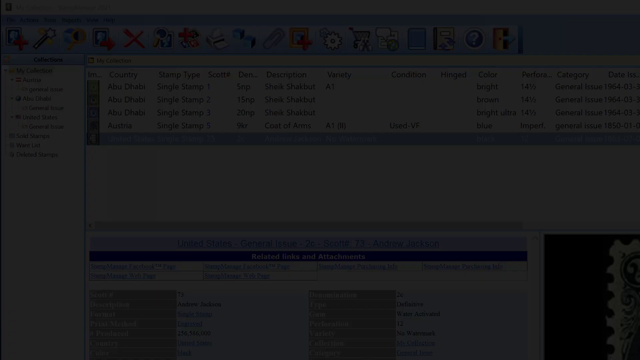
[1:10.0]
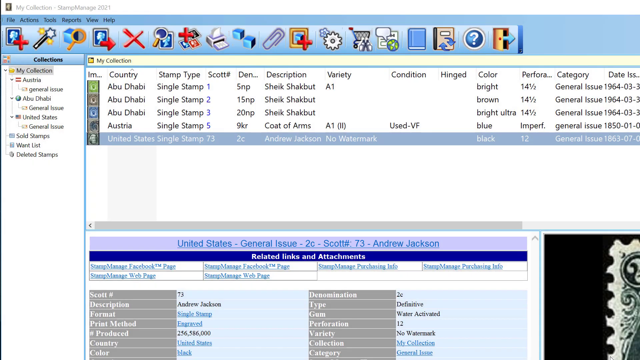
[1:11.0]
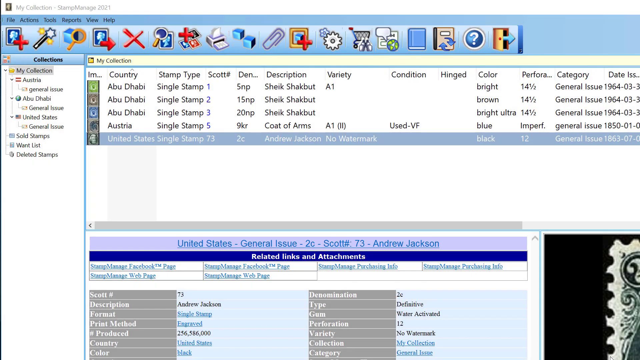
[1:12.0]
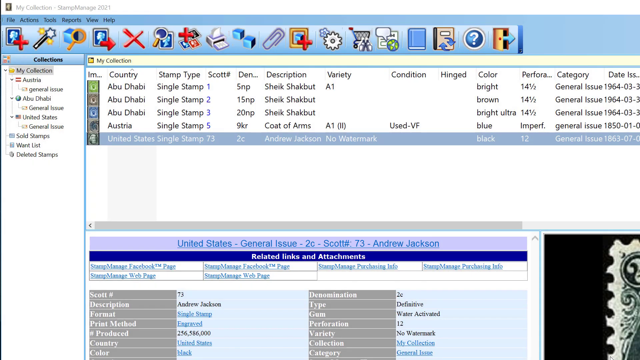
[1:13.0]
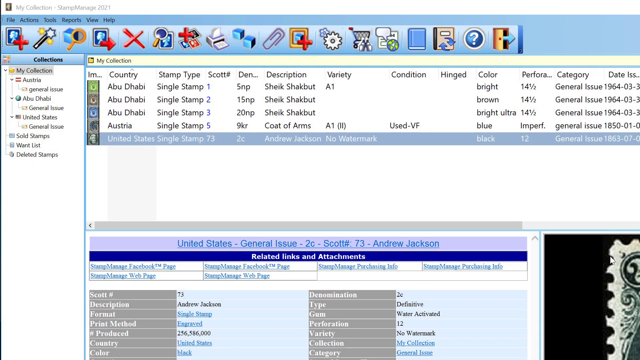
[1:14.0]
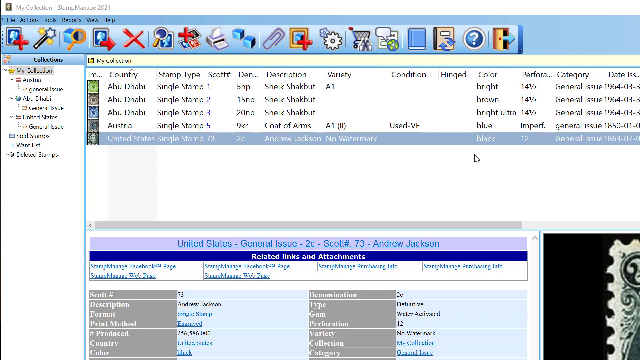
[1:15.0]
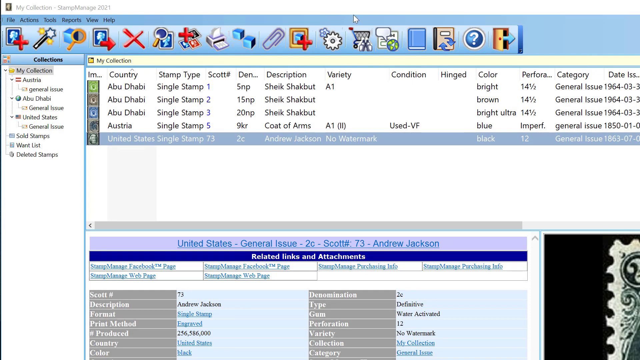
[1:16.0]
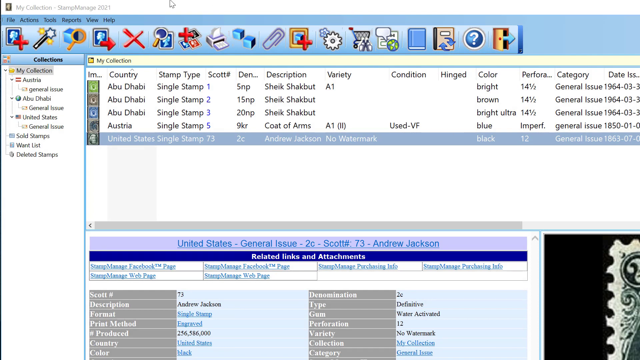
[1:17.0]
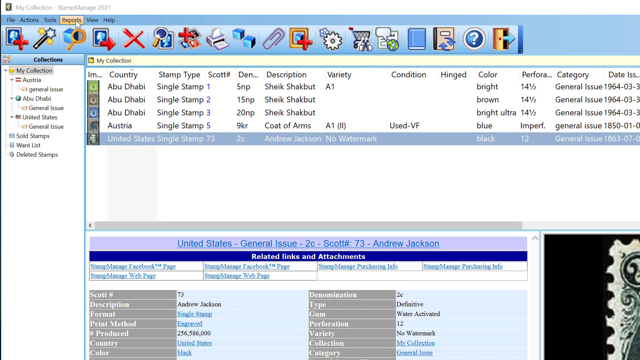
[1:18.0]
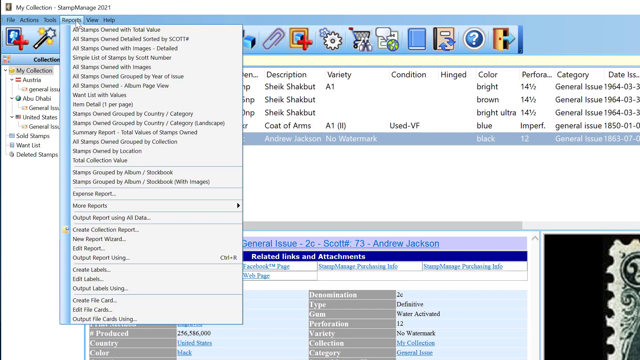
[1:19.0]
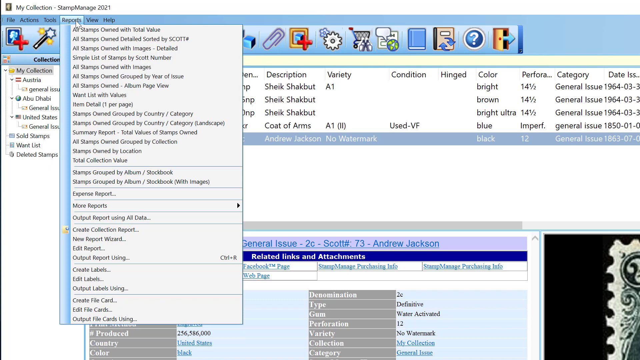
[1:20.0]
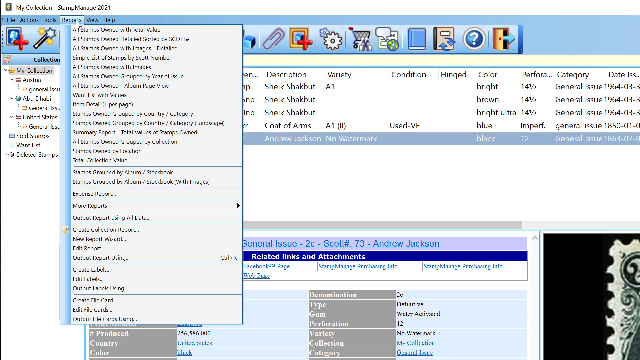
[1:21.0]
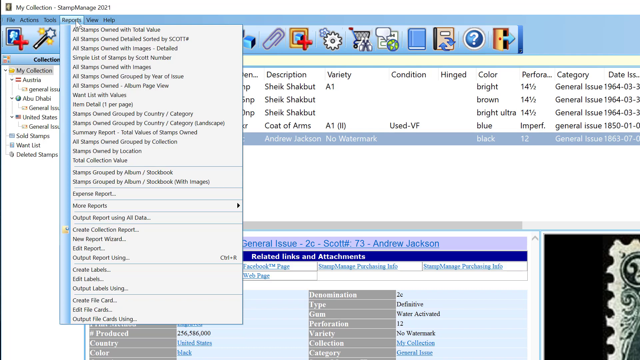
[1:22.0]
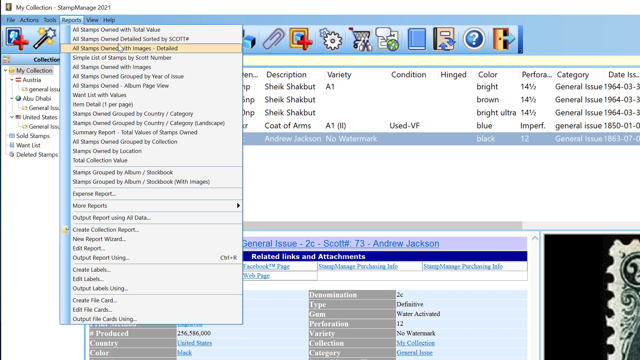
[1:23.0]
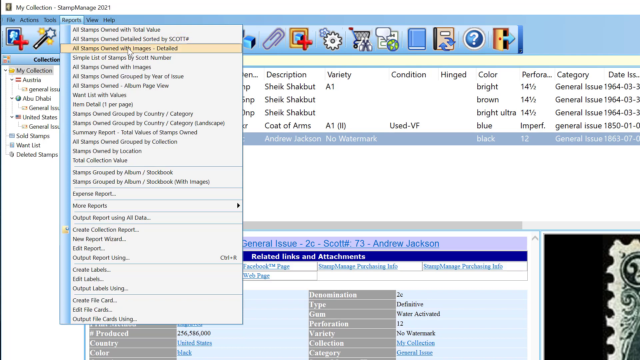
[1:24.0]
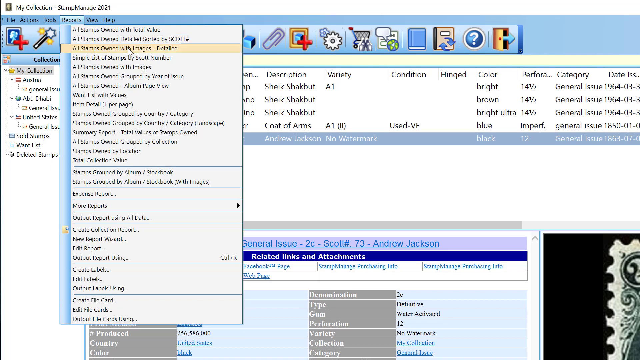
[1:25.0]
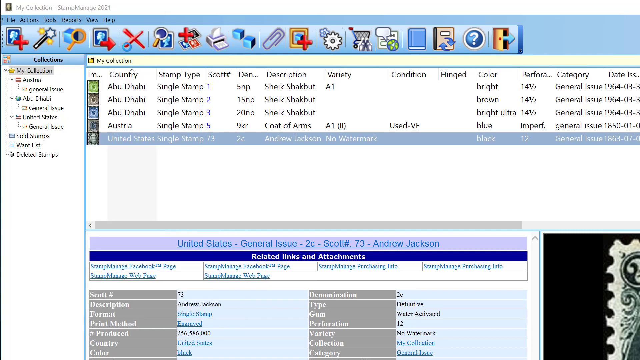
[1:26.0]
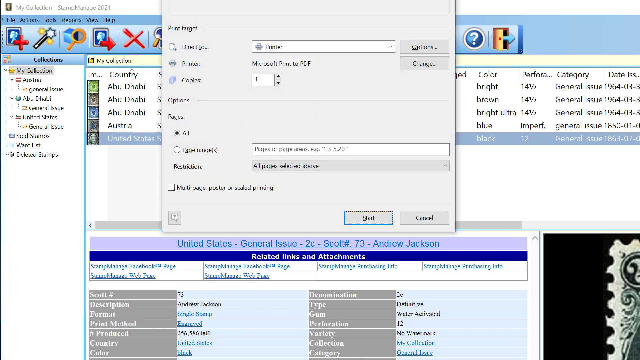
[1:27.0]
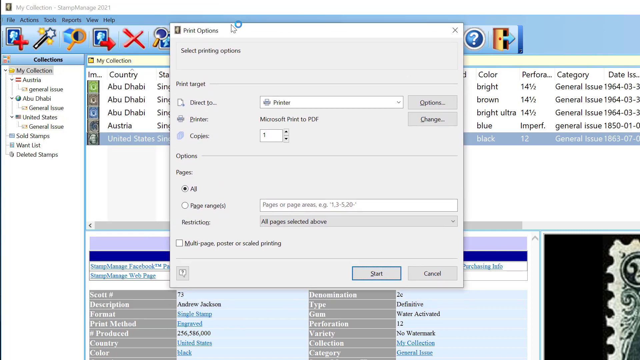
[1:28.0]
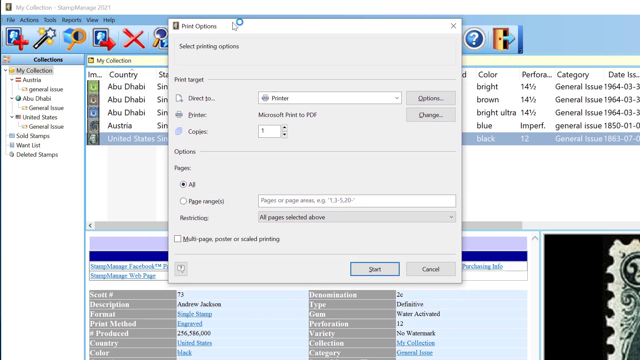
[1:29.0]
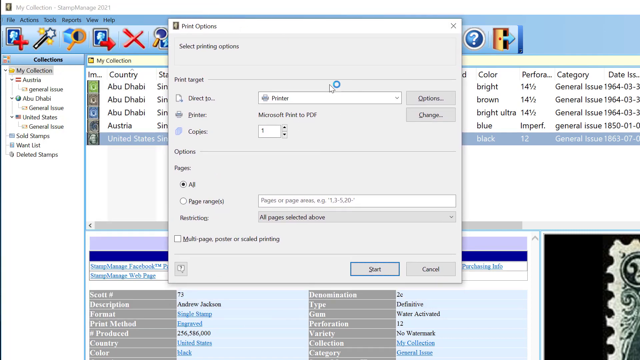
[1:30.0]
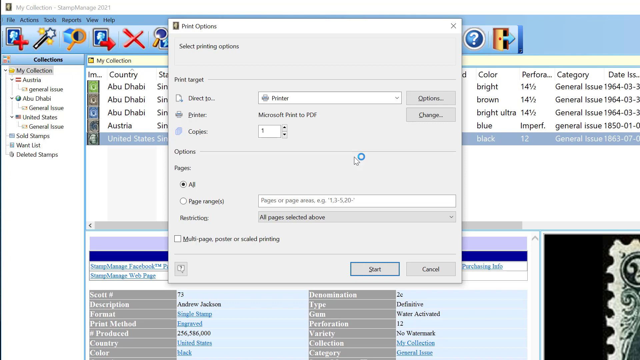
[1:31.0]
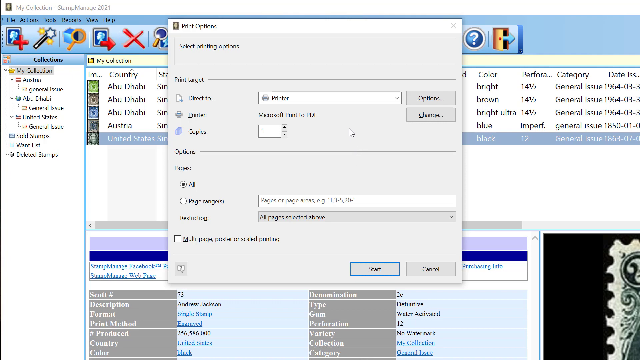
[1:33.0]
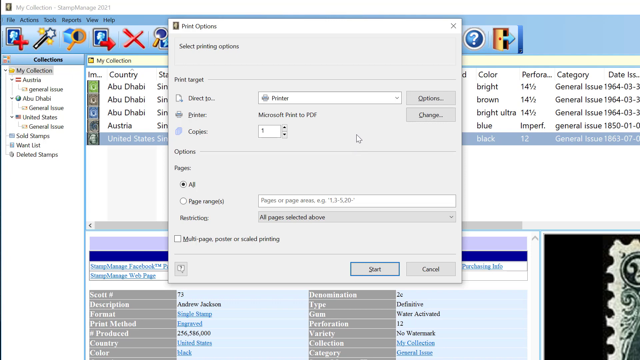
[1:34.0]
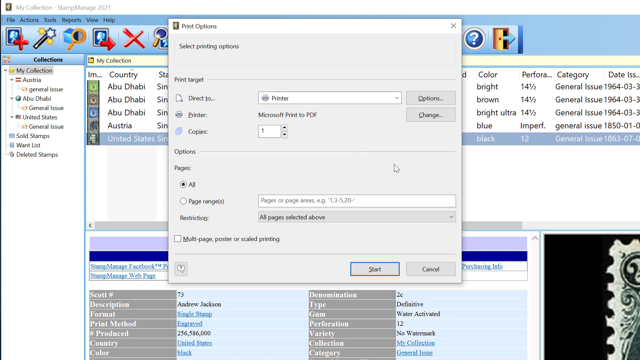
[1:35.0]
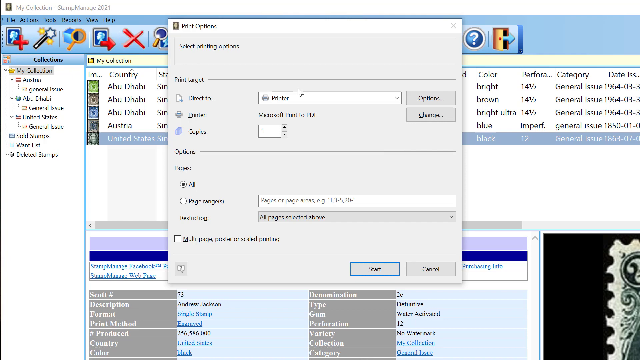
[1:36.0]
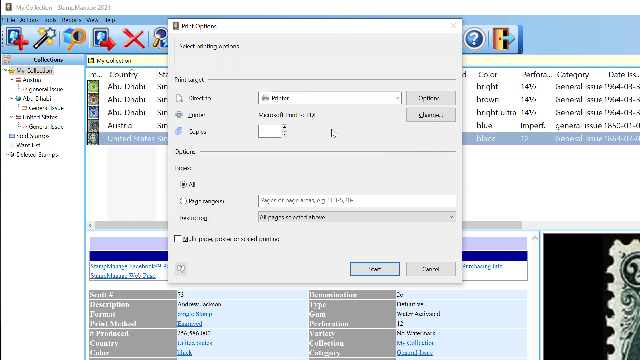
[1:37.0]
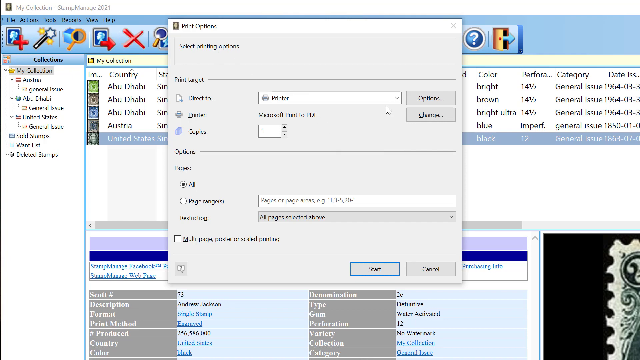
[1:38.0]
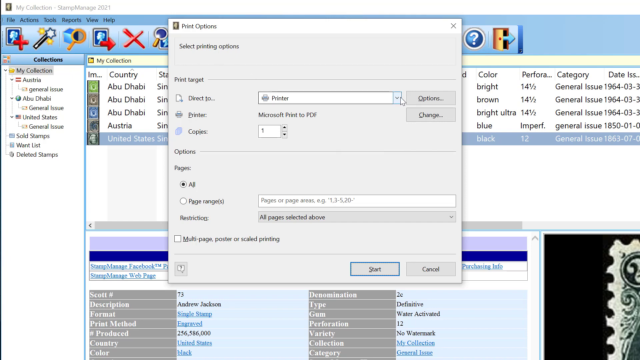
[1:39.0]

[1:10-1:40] The screen returns to the single window with the icons and the list of five stamps in the "My Collection" folder. The cursor moves around the page, then clicks "Reports", bringing down a large menu. The cursor goes to the third row of the menu, "All Stamps Owned with Images Detailed", and clicks it. A new, smaller window opens on top of the other window, titled "Print Options", with "Select Printing Options" below the title. The cursor moves around a little in a circular manner, goes down, then goes up, and clicks a drop-down menu labeled "Printer". The window also lets the number of copies be selected, and below that are page options: "All Pages" or "Page Range", where a range of pages to print can be entered.